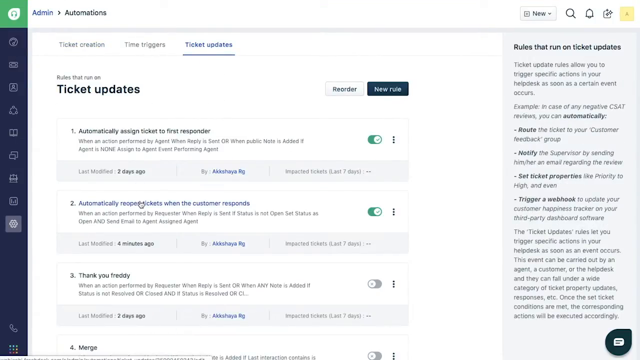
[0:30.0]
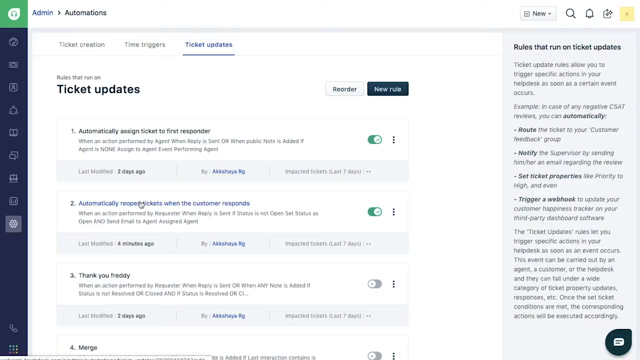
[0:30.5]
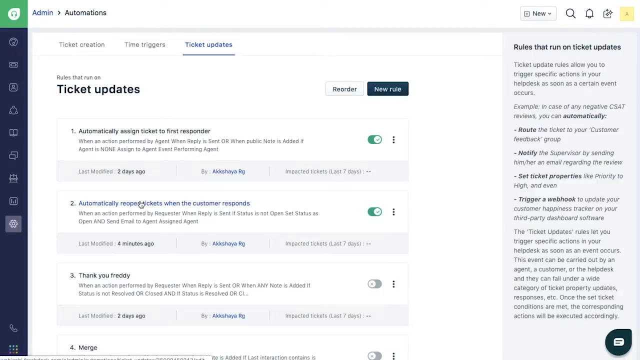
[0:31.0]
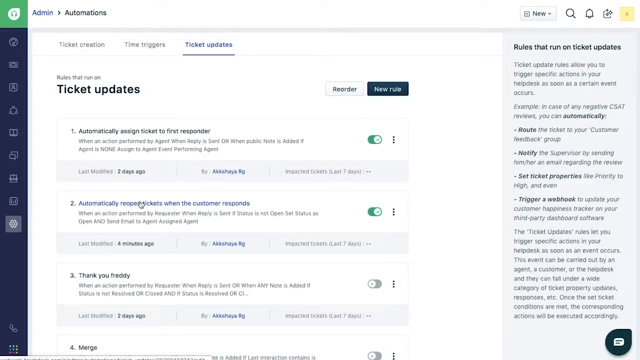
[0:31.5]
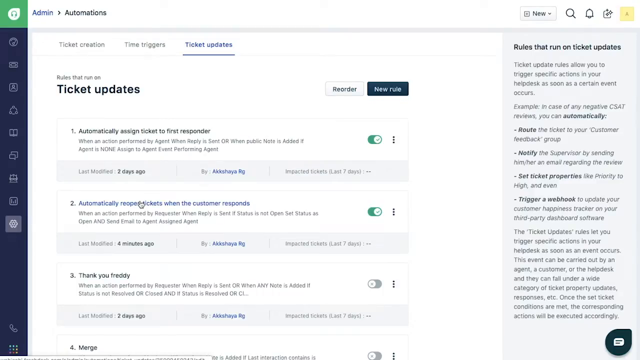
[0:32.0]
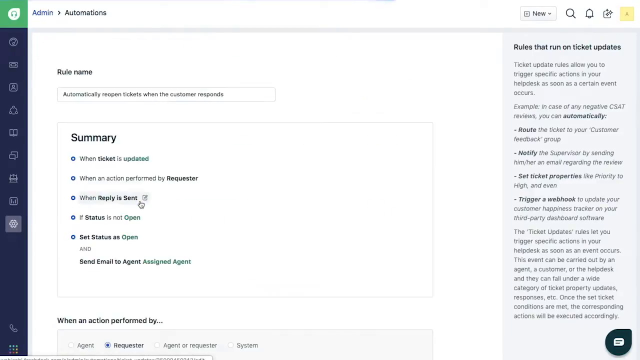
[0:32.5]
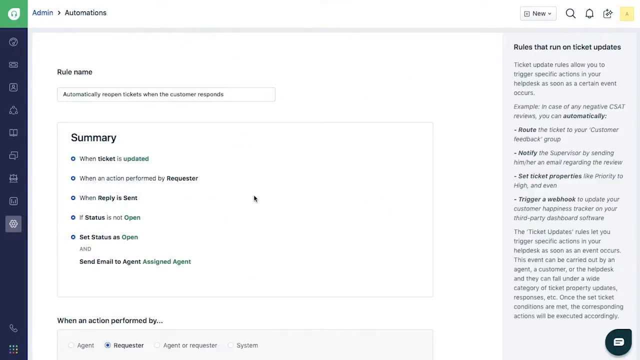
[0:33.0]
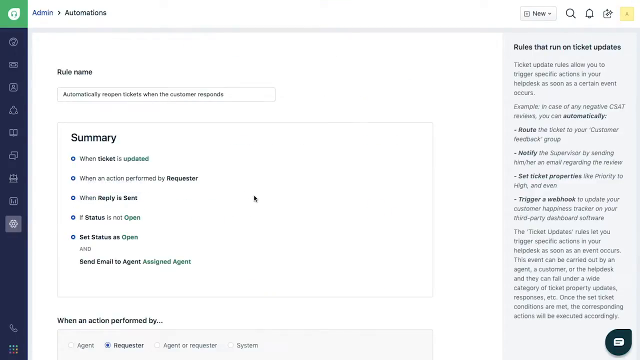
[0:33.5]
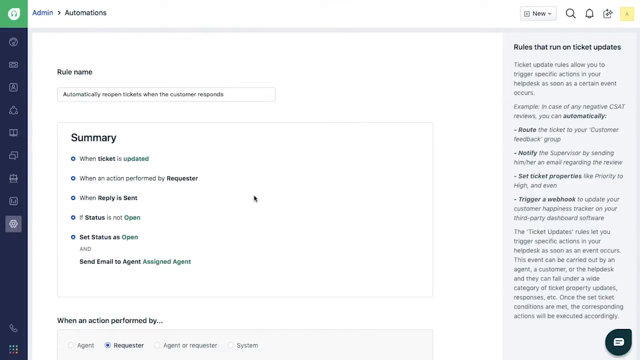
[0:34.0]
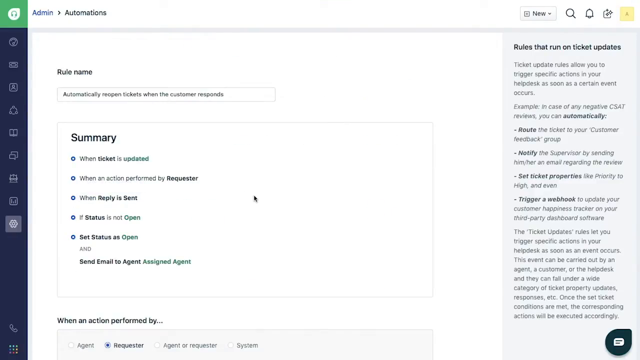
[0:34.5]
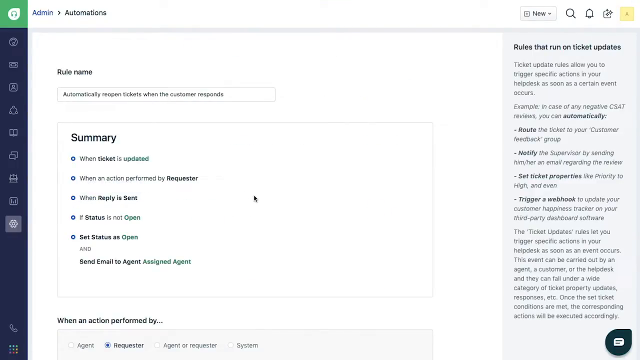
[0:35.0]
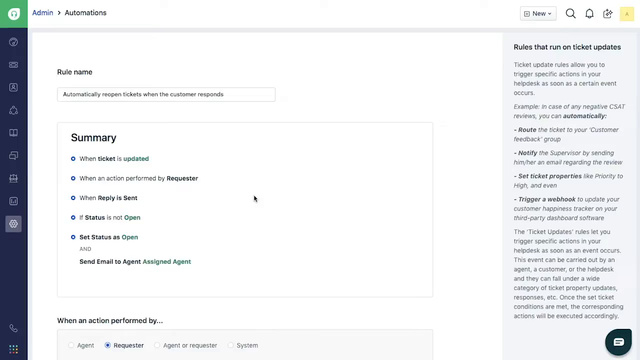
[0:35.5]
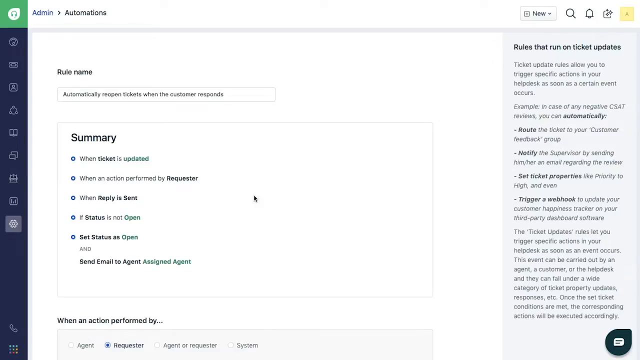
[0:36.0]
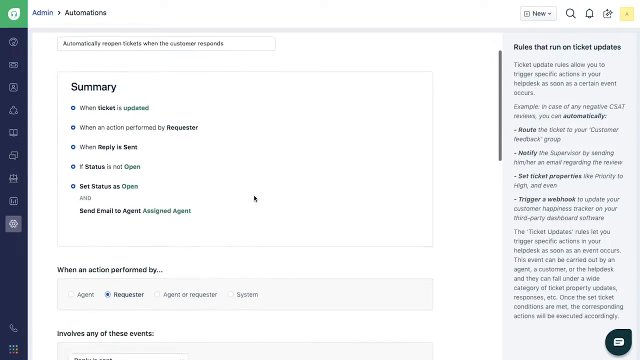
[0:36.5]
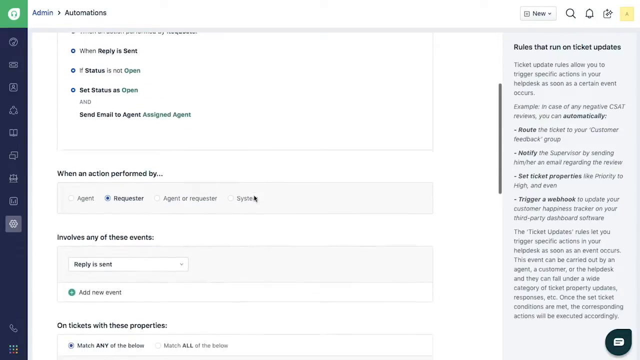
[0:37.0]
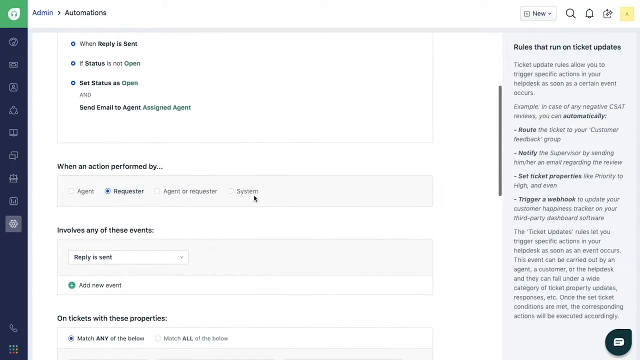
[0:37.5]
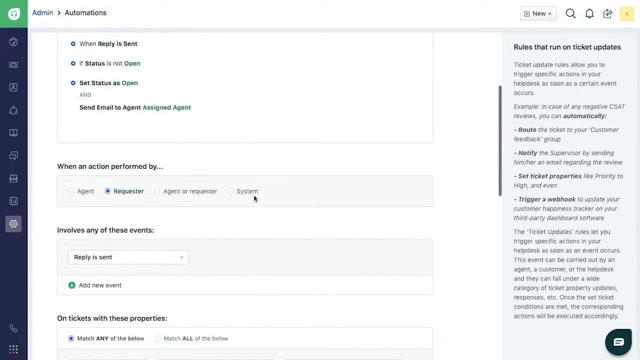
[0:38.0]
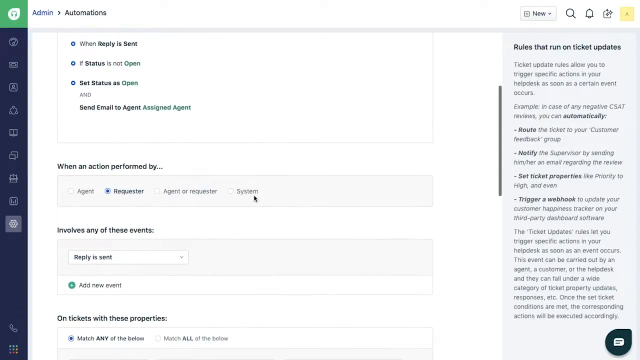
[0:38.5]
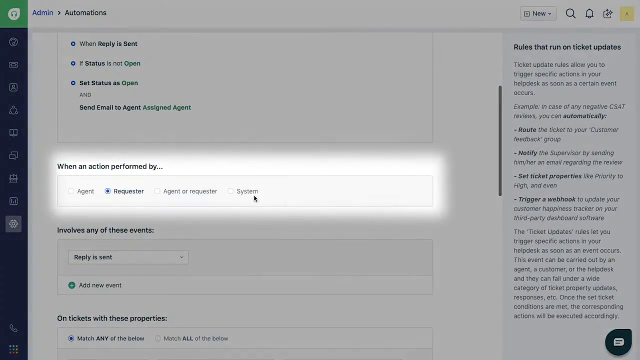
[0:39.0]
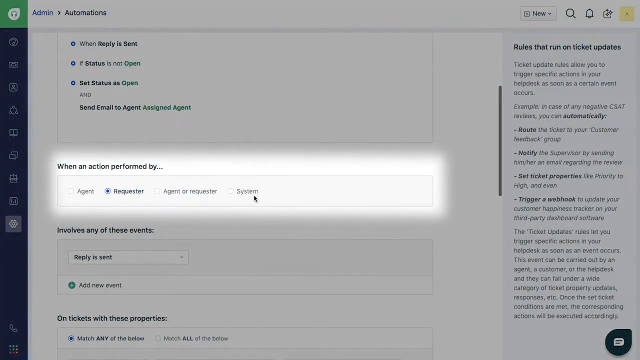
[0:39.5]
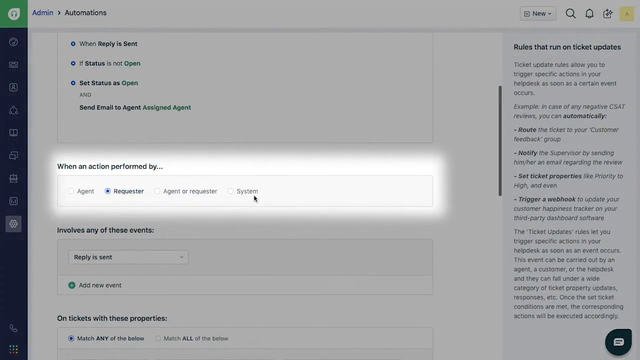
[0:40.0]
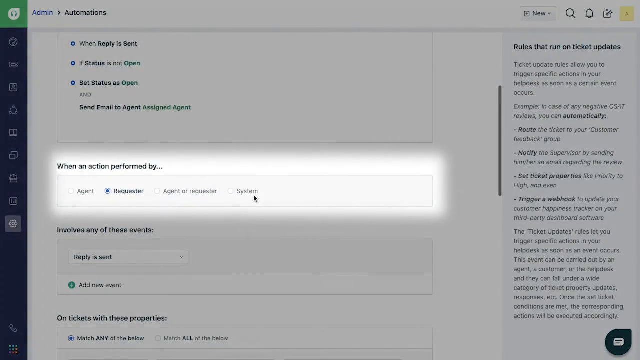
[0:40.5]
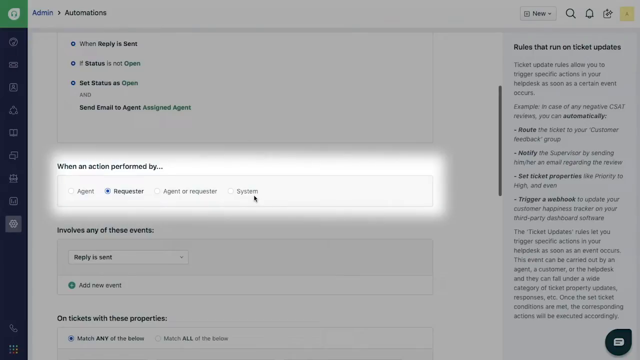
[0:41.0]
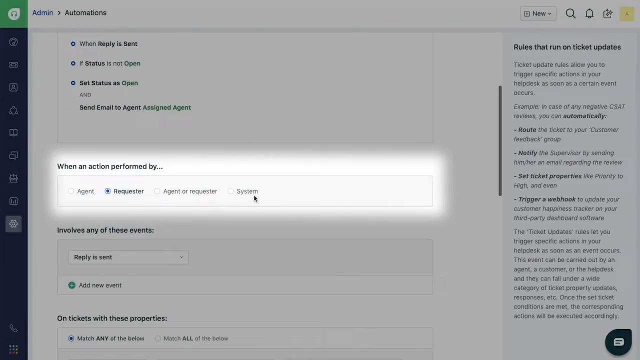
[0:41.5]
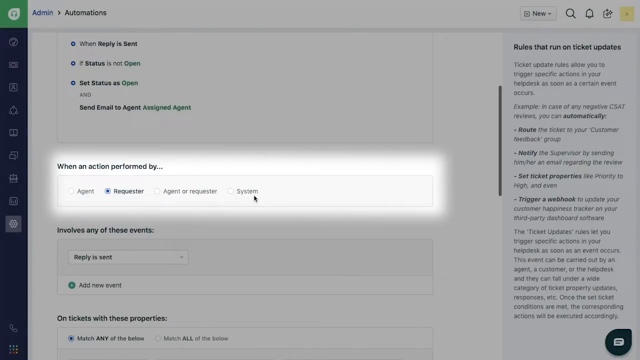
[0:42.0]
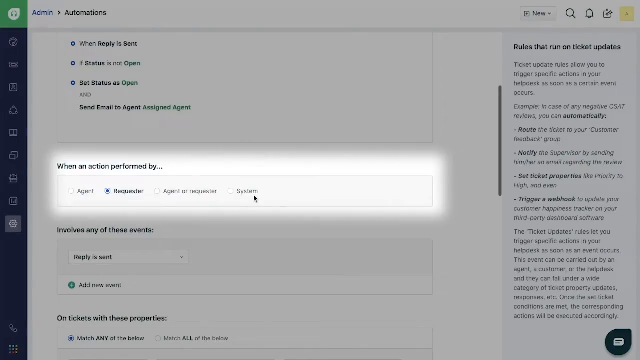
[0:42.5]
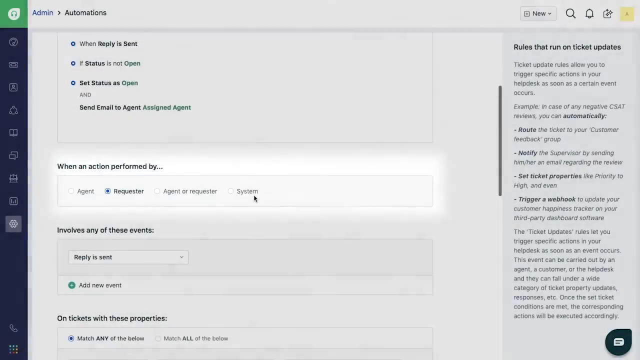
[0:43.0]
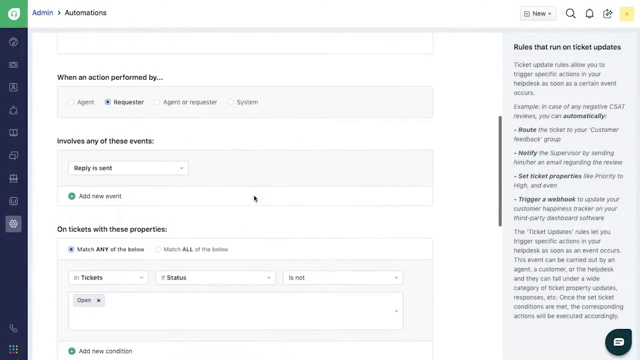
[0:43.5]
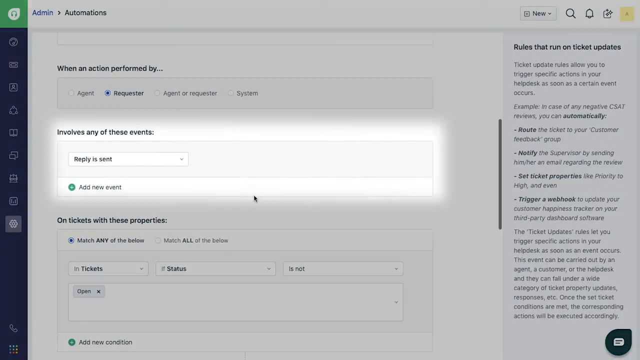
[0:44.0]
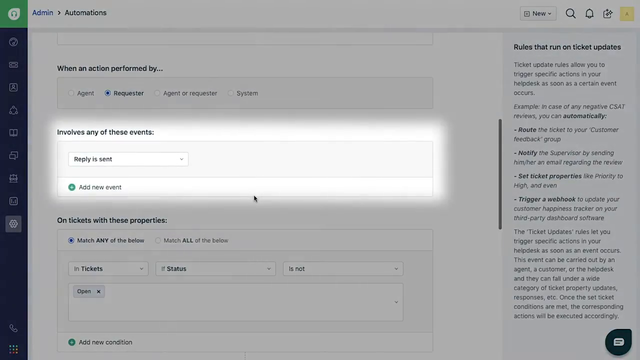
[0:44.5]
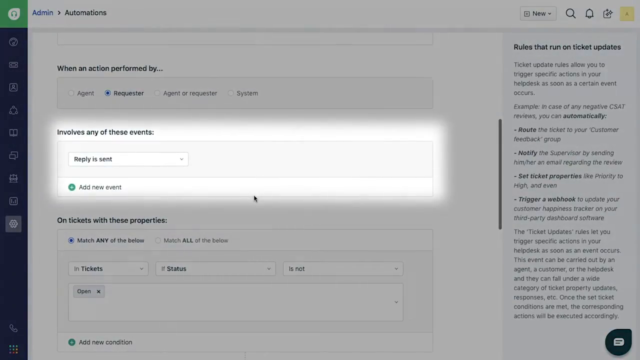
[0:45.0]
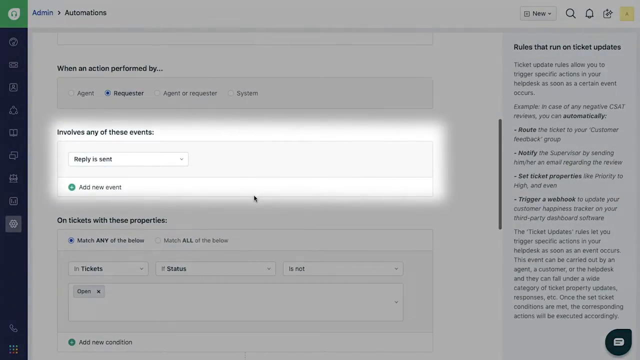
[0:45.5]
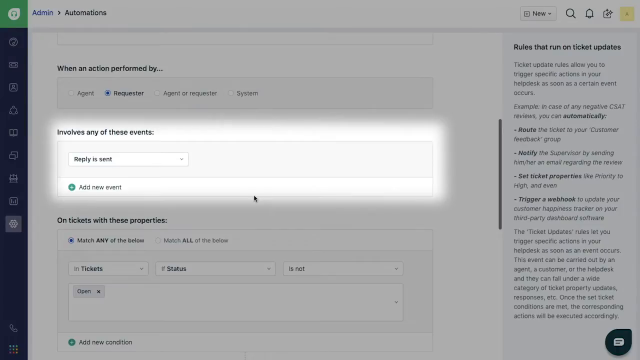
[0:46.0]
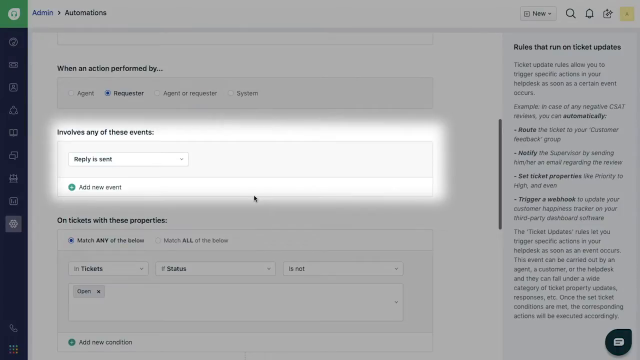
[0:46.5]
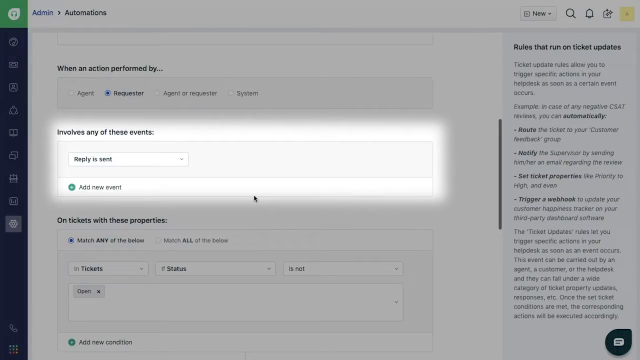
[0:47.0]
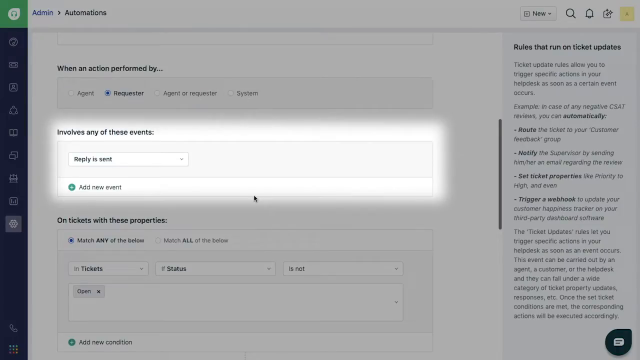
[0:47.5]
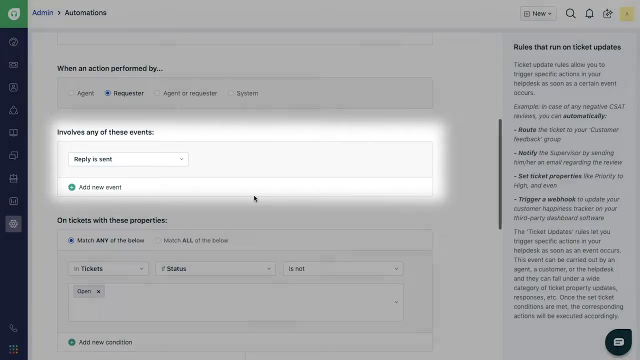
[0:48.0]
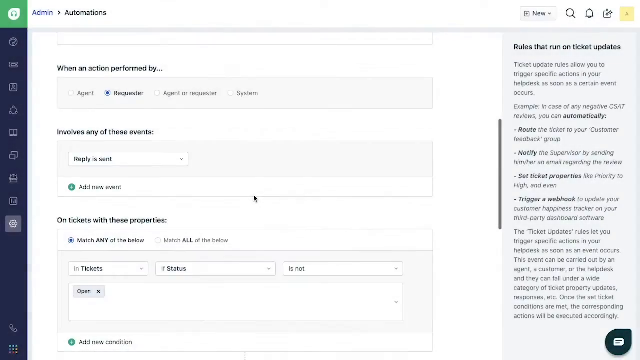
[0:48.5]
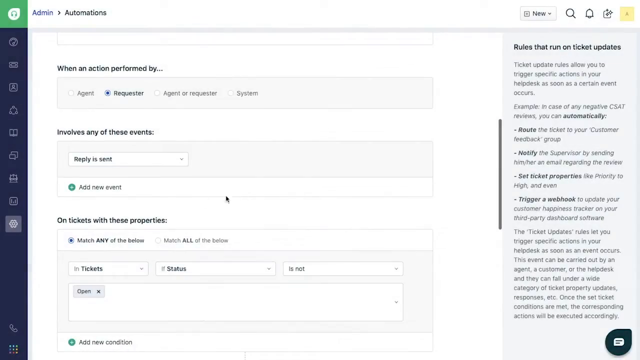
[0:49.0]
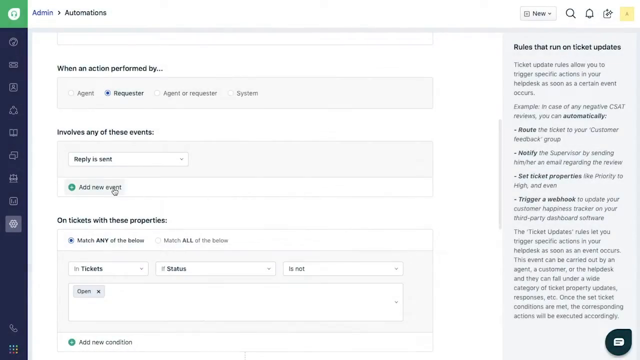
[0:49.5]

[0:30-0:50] A ticket program for customer service tickets is open on the admin automations page, with three tabs along the top: ticket creation, ticket time triggers, and ticket updates. Ticket updates is selected; it reads "ticket updates" and lists several rules. The first reads "automatically assigned ticket to first responder," the second reads "automatically reopen tickets when the customer responds," and the third reads "thank you Freddy" with conditions such as when an action is performed by a requester, when a reply is sent or any note is added, and status is not resolved or closed. It seems to be some kind of automation tool for tickets in a customer service or IT help desk setting. The user clicks the second rule, "automatically reopen tickets when the customer responds," which opens a summary for the rule that reads: when the ticket is updated, when an action is performed by a requester, when reply is sent, when status is not open, set status as open and send email to agent, assigned agent. The user scrolls down to a section that reads "when an action is performed by," with four options, each with a radio button next to it, then continues scrolling to an "involves any of these events" section.